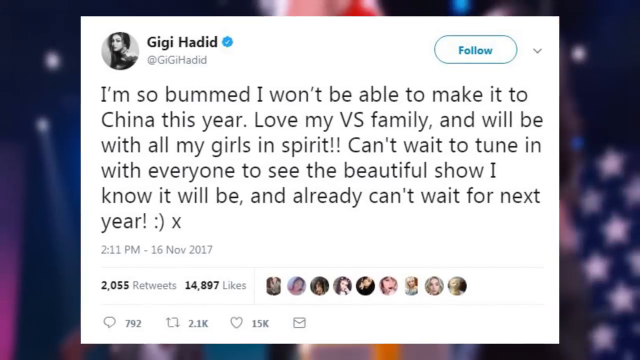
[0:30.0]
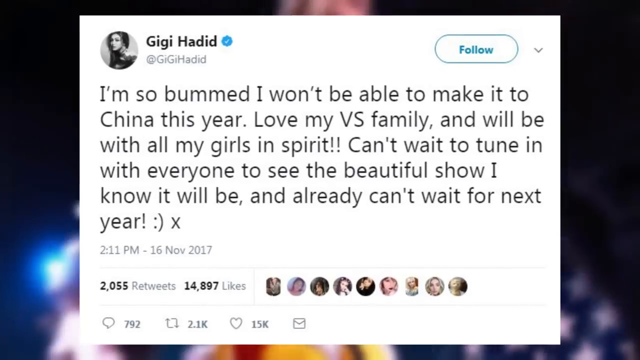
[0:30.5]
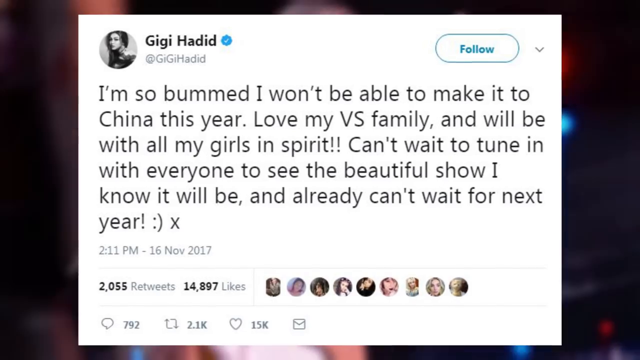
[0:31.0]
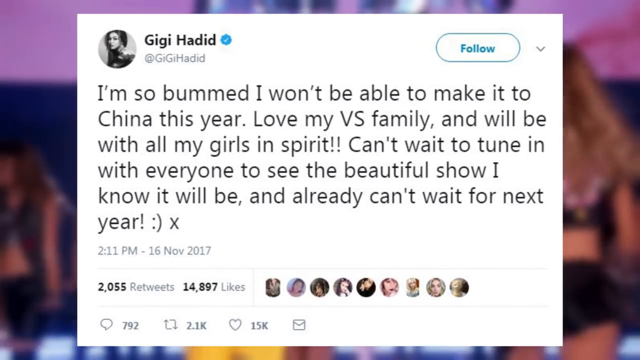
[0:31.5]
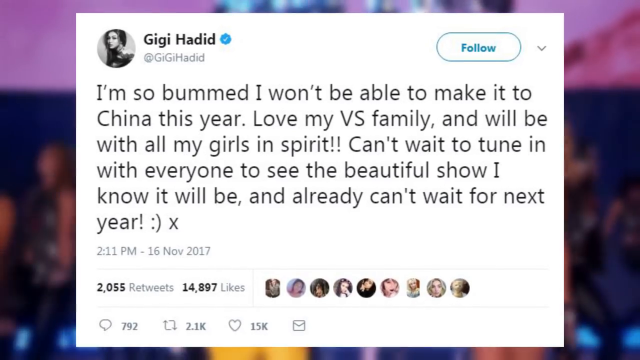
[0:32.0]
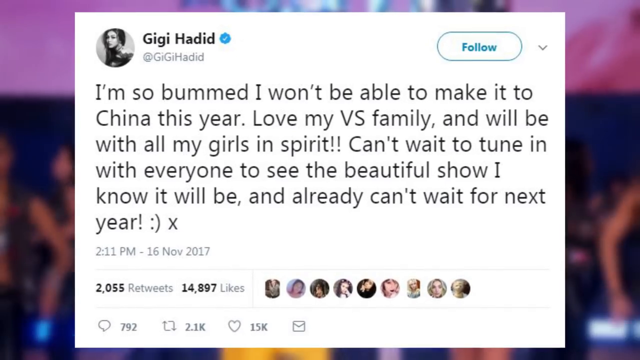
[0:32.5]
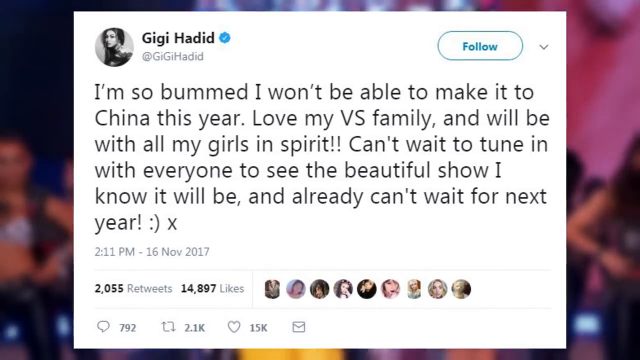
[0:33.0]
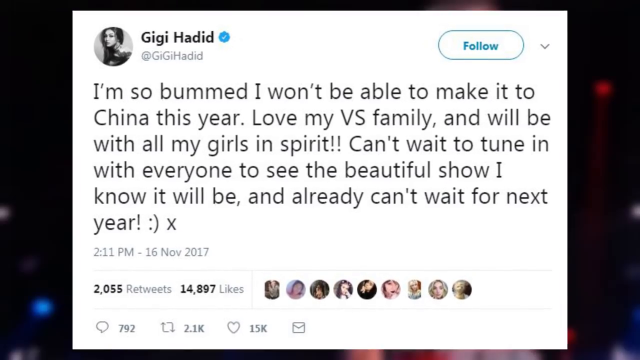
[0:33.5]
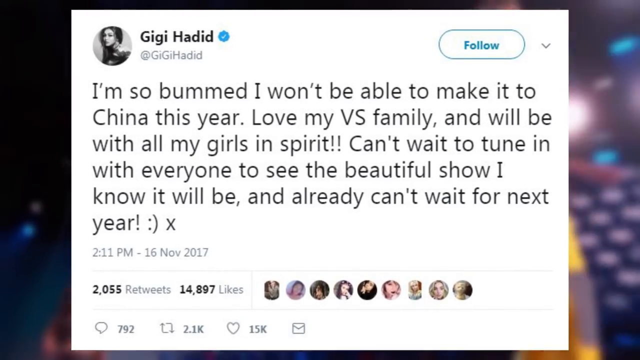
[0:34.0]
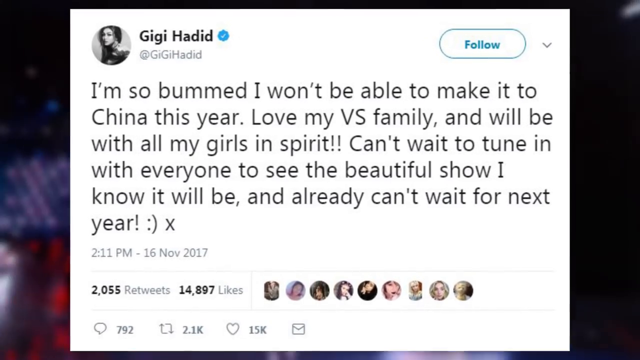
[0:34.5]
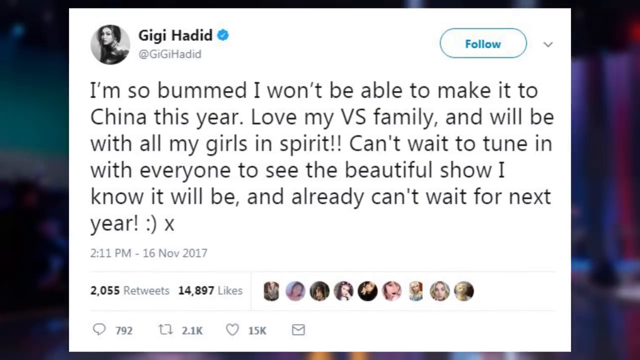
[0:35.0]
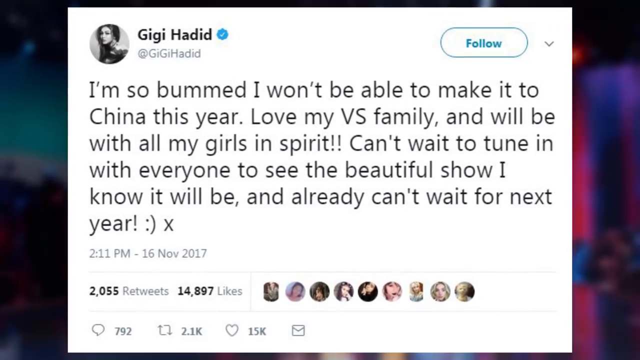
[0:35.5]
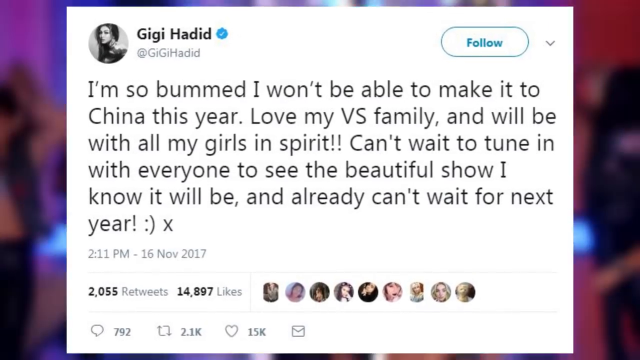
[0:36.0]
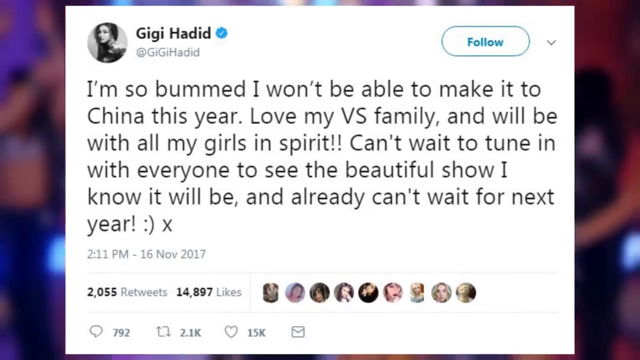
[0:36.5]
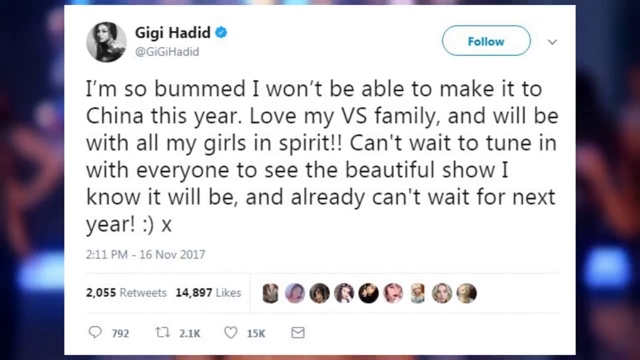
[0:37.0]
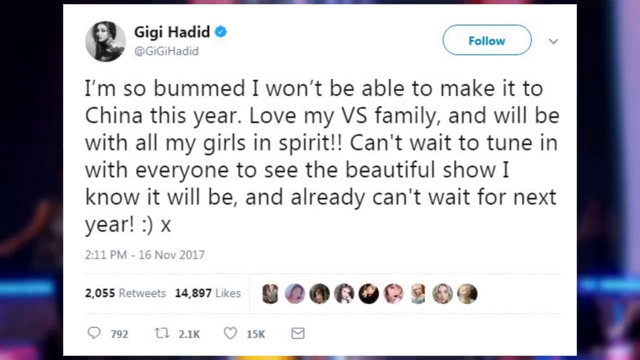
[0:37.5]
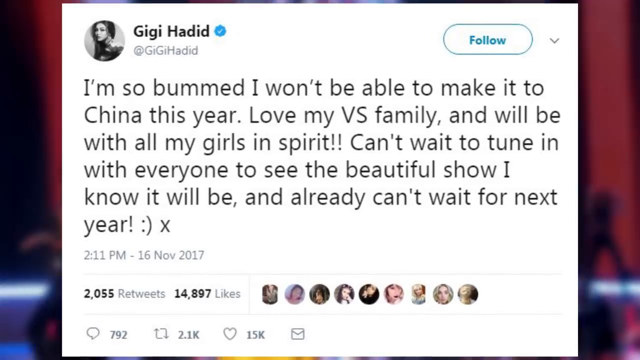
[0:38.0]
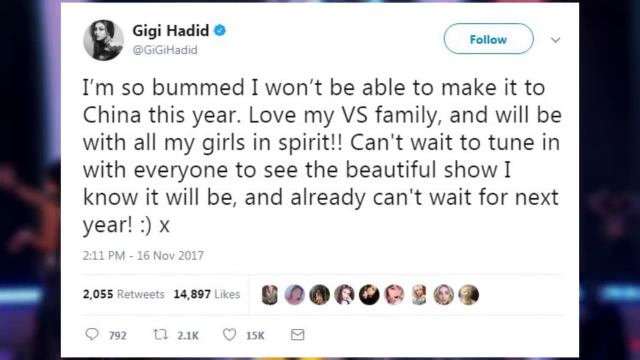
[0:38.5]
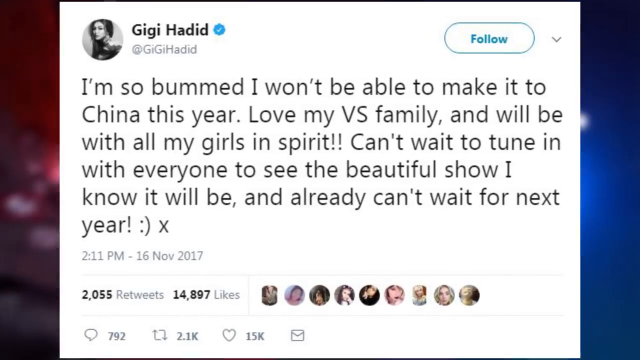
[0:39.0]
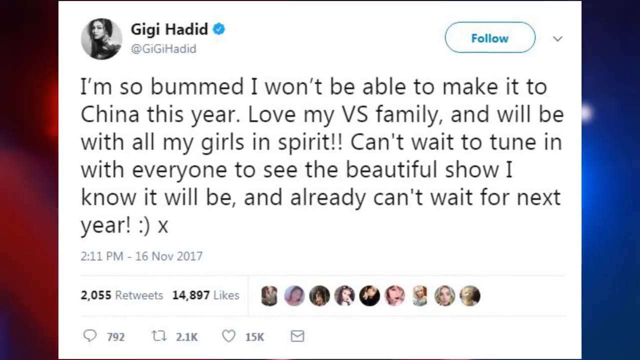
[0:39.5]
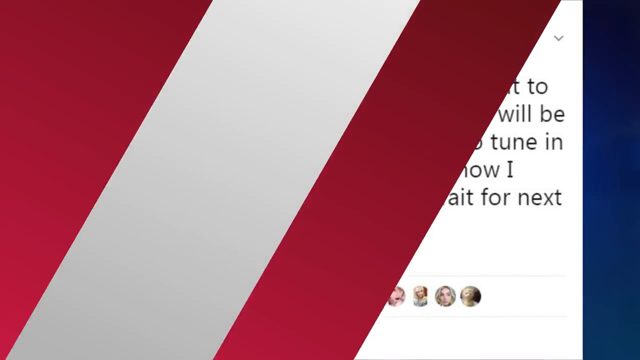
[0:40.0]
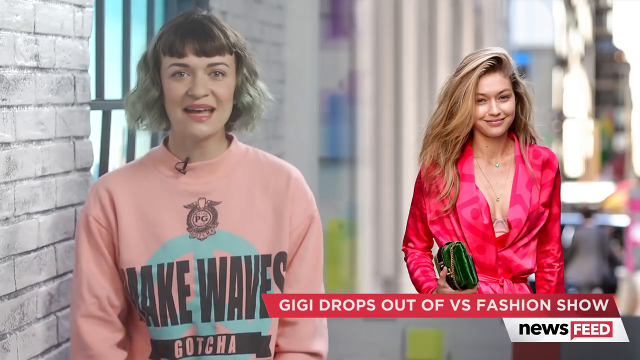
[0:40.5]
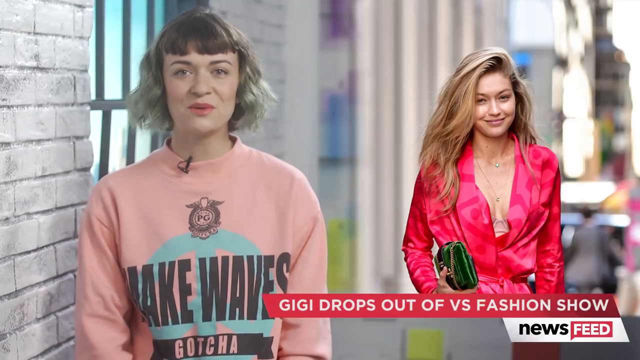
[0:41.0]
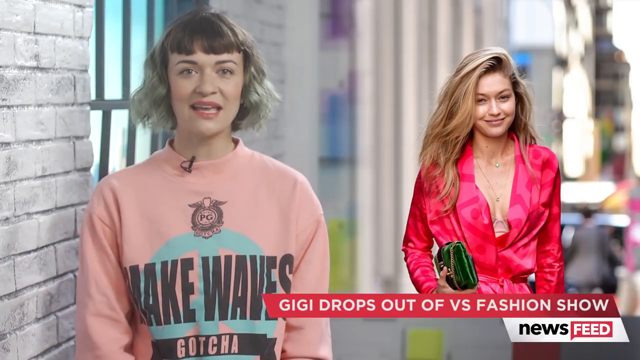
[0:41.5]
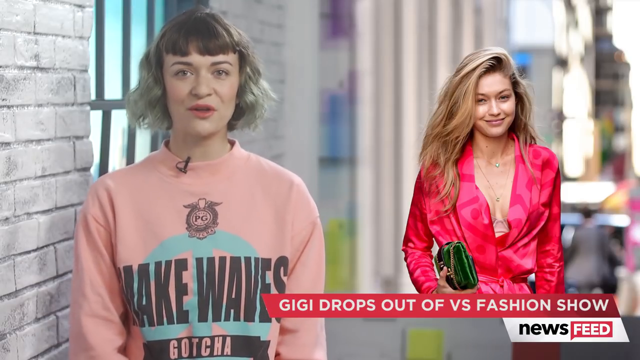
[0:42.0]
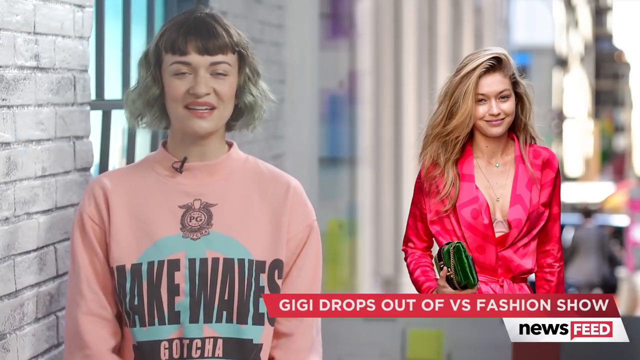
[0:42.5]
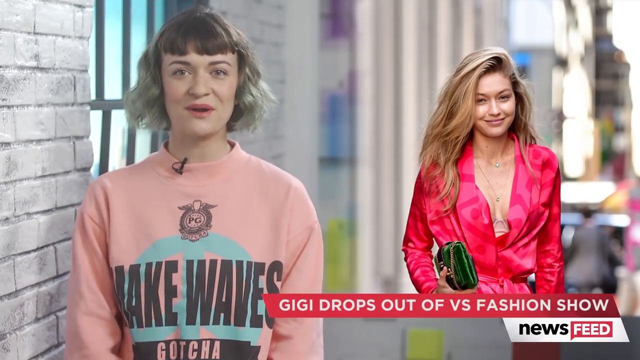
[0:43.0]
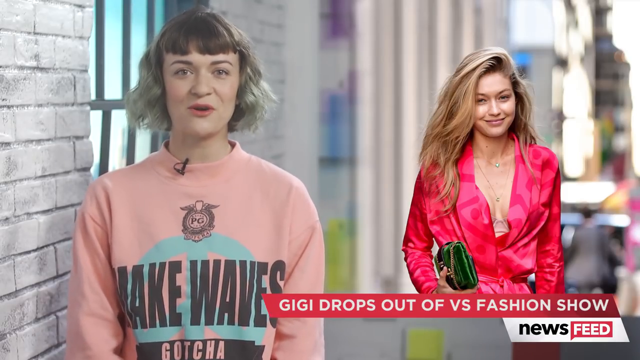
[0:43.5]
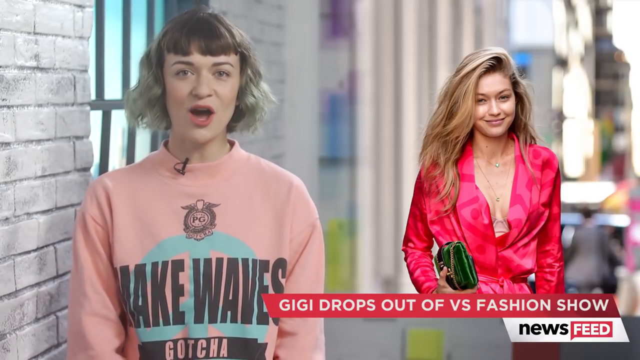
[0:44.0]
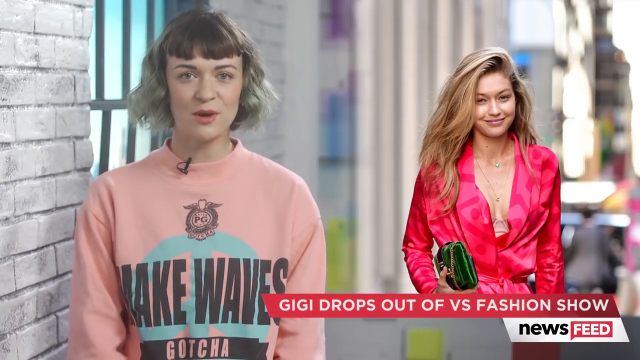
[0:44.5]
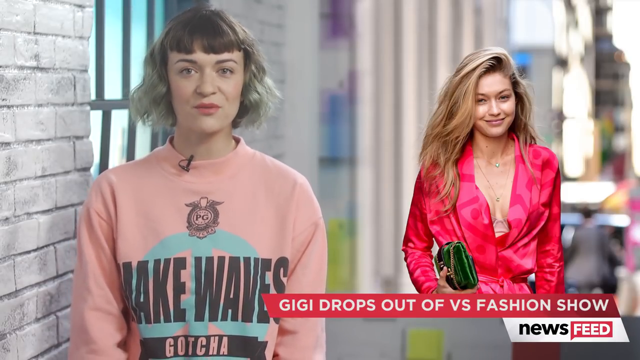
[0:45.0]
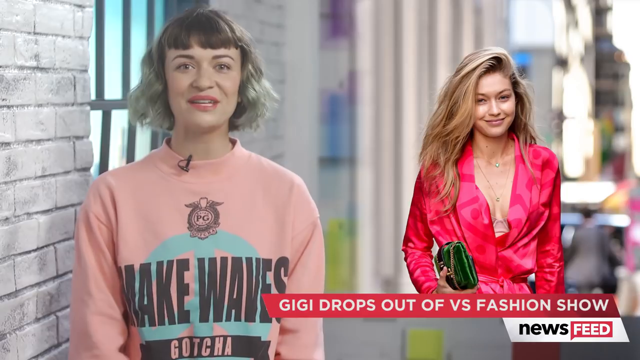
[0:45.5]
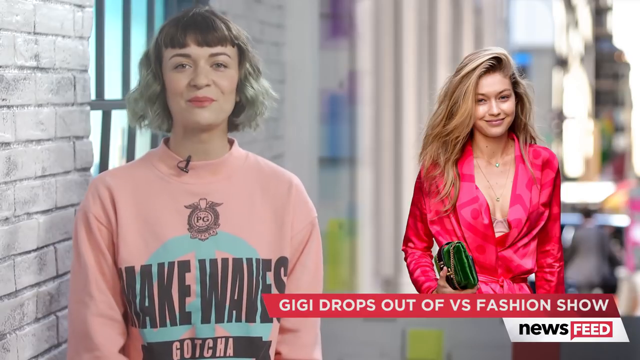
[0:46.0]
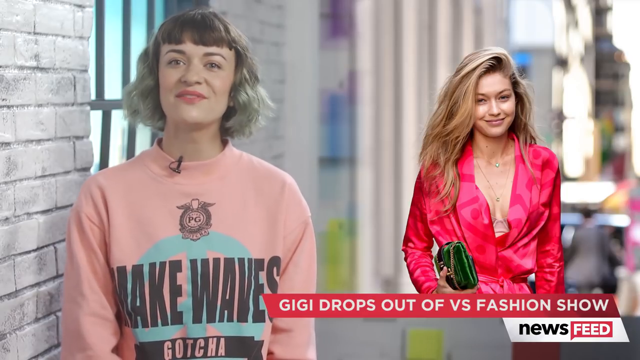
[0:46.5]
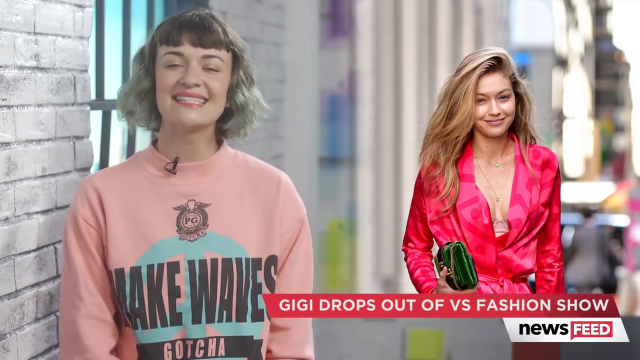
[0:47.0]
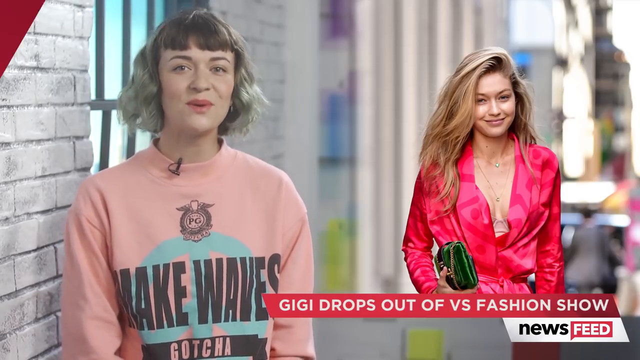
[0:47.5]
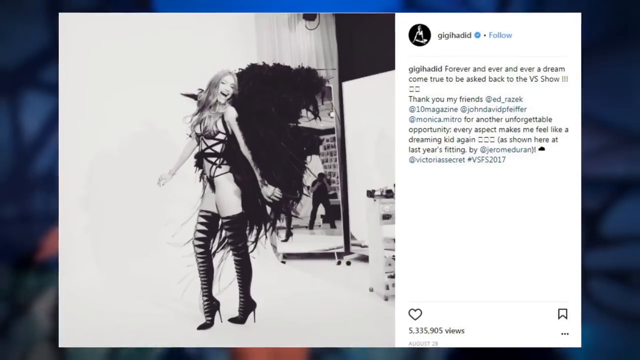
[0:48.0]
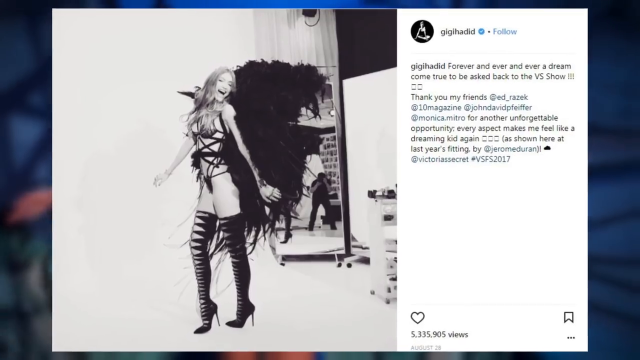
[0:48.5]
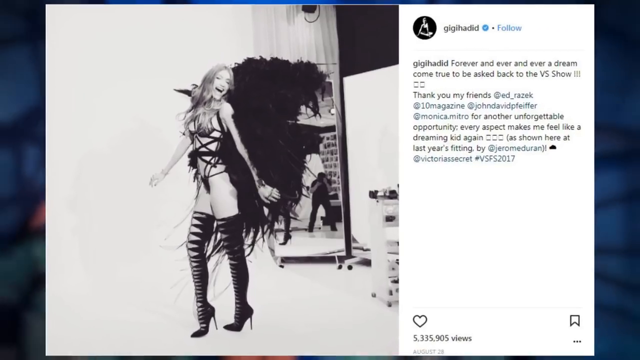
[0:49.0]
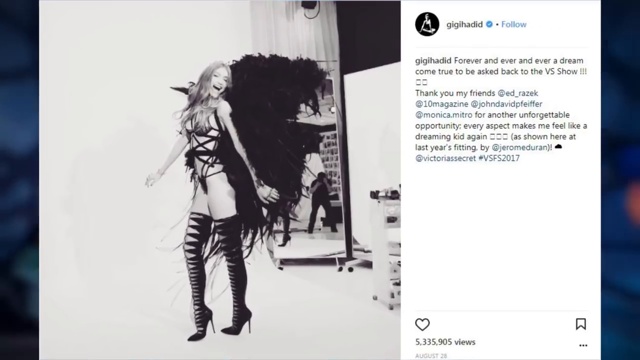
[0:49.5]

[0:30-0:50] The social media post has an avatar in the upper left, a circle with a black and white picture, and a row of circles with other avatars at the bottom. It reads "2,055 retweets" and "14,897 likes". Behind it the background is blurry and moving around quite a bit. The post slowly grows larger, as if zooming toward the camera. The shot then switches to the woman in the same sweatshirt on the left side. As she talks, a picture of the model who dropped out appears on the right, wearing a pink and red outfit, her hair still parted on the right and over toward the left but now standing up quite a bit, and holding a green purse. The woman on the left keeps talking quickly, blinking occasionally. Another social media post follows, with a picture of the model standing toward the left in an outfit of just strings barely covering her body, smiling widely, with what looks like a bunch of big feathers attached to her back. On the right side, the post reads "Gigi forever and ever and ever. A dream come true to be asked back to the VS show. Thank you my friends." followed by a number of tagged people. The camera zooms into the post.